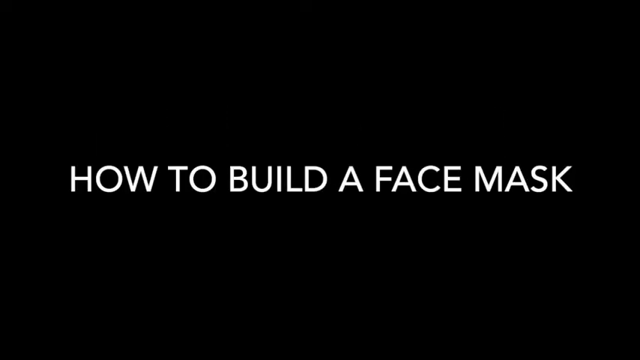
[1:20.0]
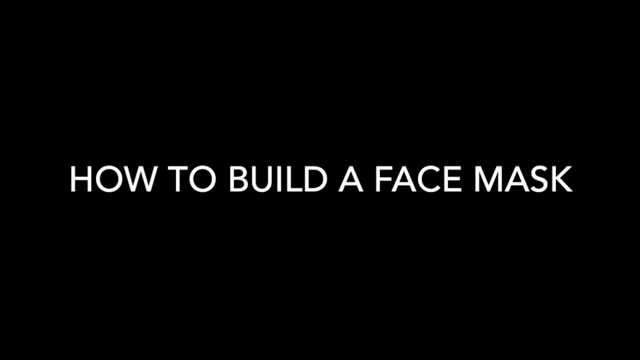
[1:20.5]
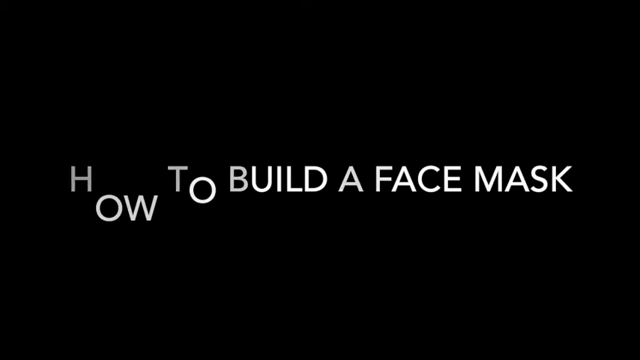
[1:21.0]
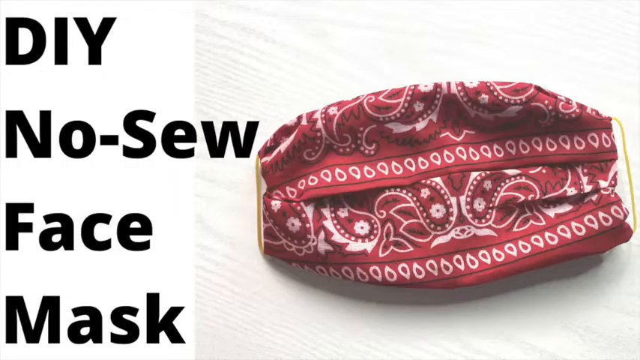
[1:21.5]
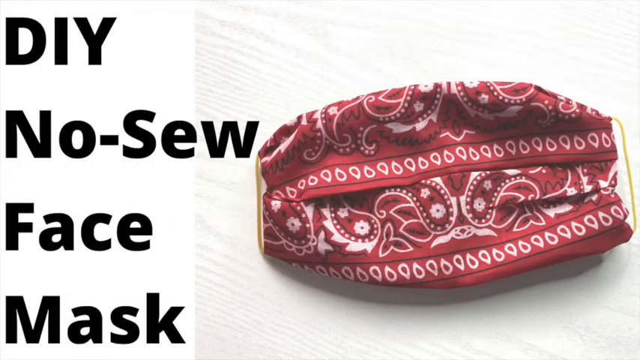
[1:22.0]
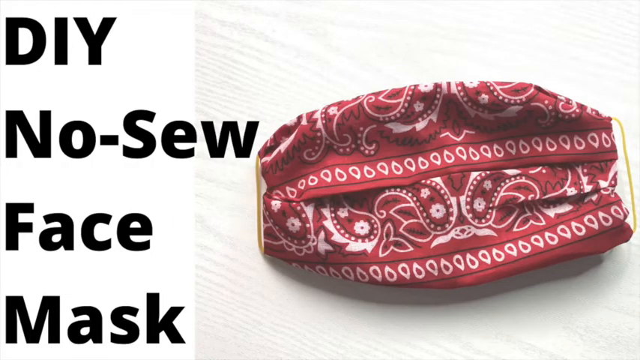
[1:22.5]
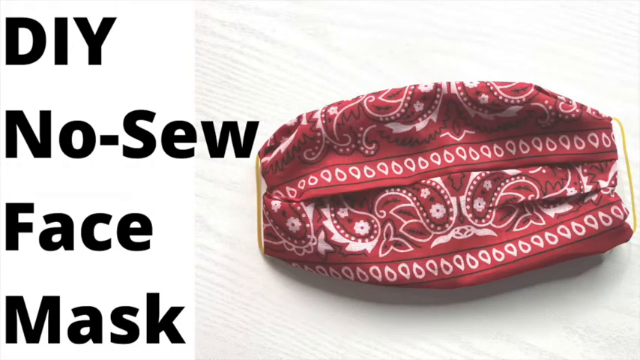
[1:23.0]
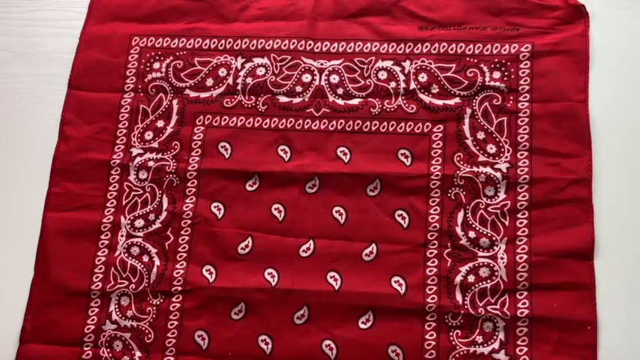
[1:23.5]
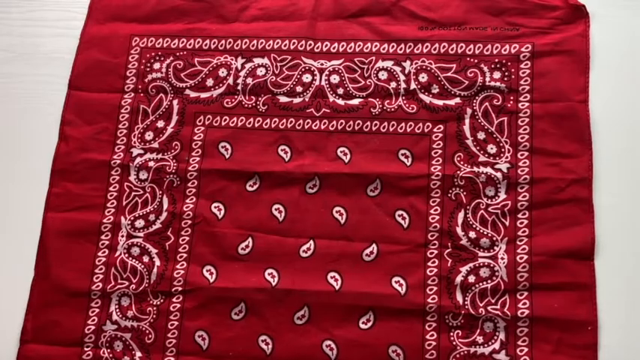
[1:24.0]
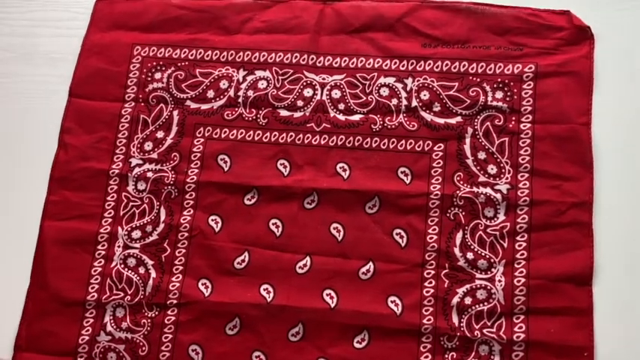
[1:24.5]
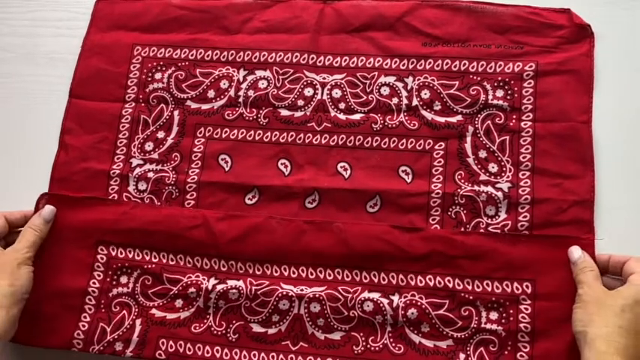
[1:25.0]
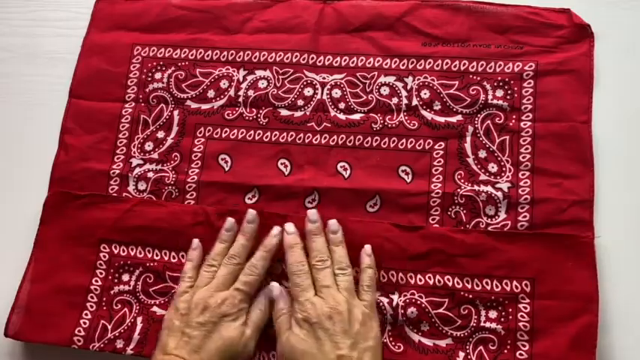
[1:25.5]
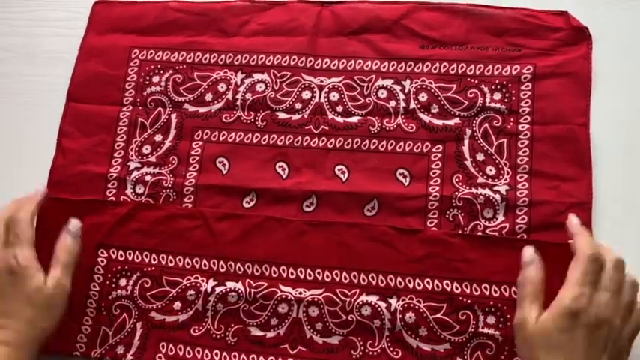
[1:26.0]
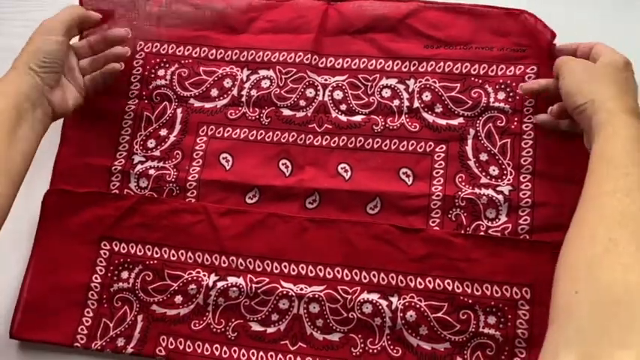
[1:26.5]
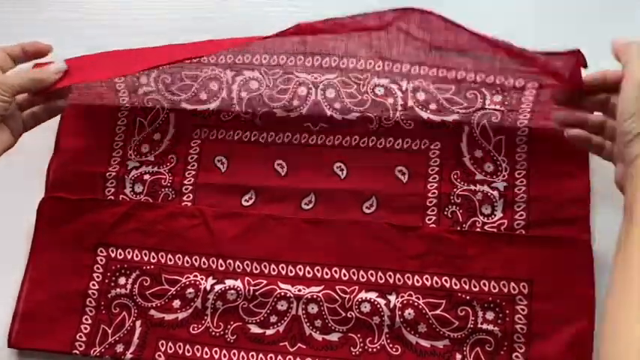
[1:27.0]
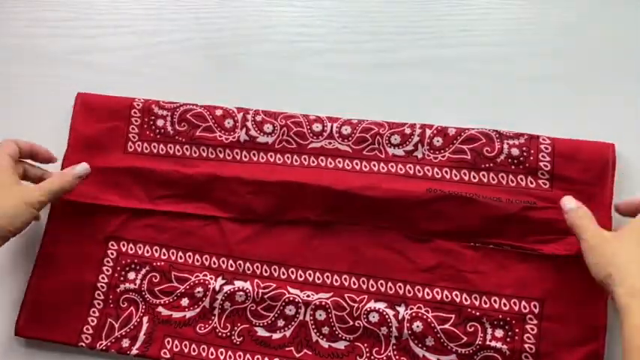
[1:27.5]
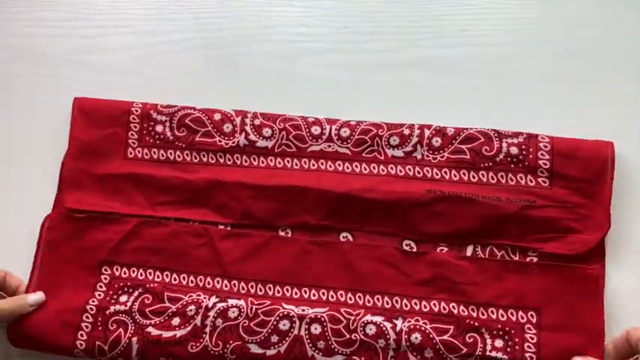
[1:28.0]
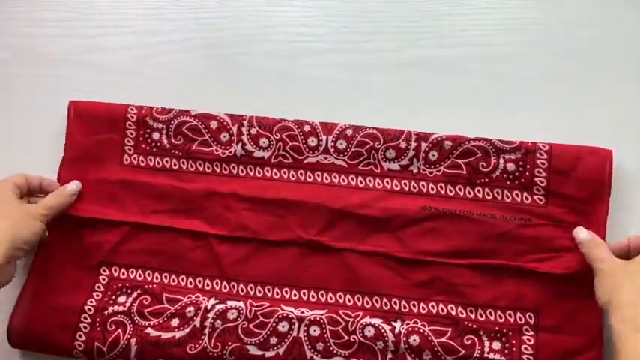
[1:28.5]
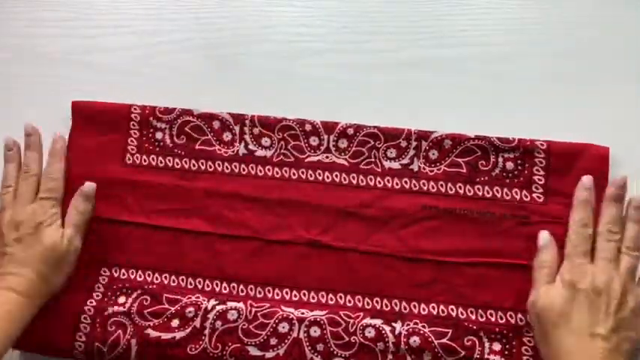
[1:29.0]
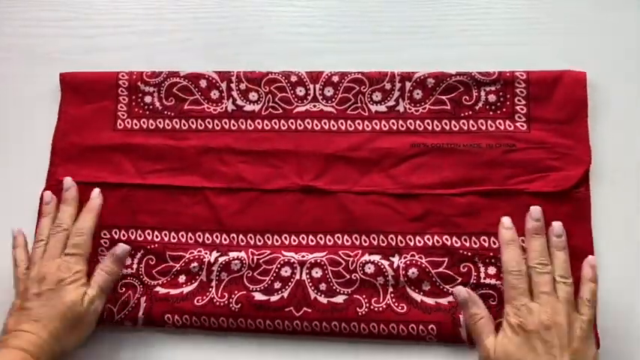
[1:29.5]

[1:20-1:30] An empty black background shows white text in the middle reading "How to Build A Face Mask." The text falls away toward the bottom as the video fades to a white background, with a red ornate piece of linen lying in the lower right corner. In the upper left corner, large black text reads "DIY," and beneath it in the same large black text "No-Sew," then "Face," then "Mask." The video switches to a recording of the red linen laid flat and stretched out against a white surface. Two hands grasp the linen at the base and fold it up and over once before flattening it out. The hands then reach to the top of the linen and fold it up and down, even out the two sides, and flatten the linen by smushing it outward from the center. A hand then moves the whole piece of linen up a little on the white surface.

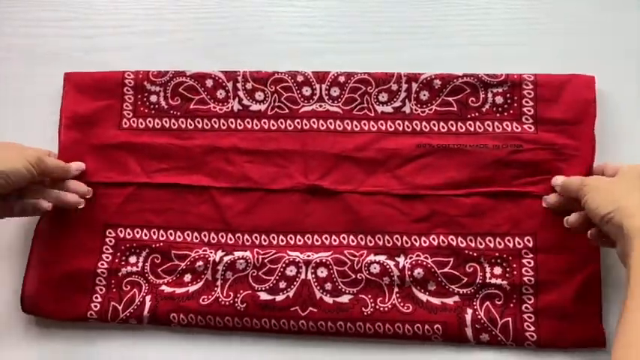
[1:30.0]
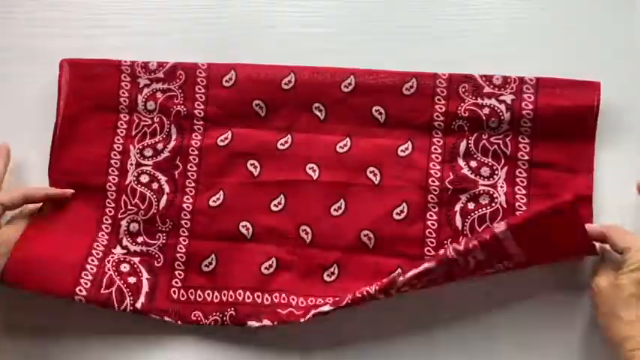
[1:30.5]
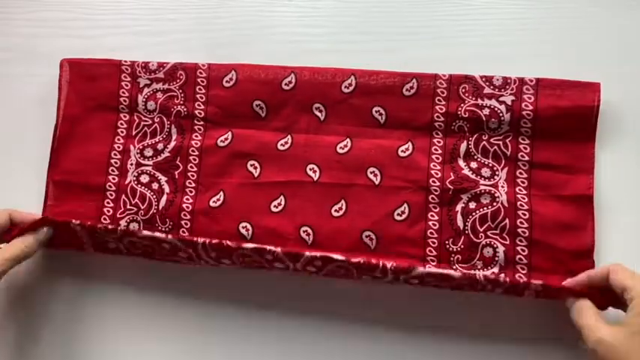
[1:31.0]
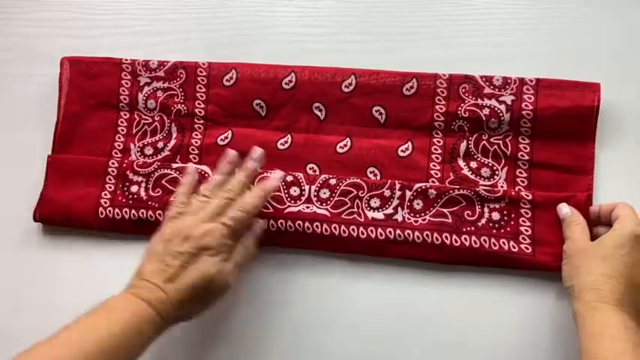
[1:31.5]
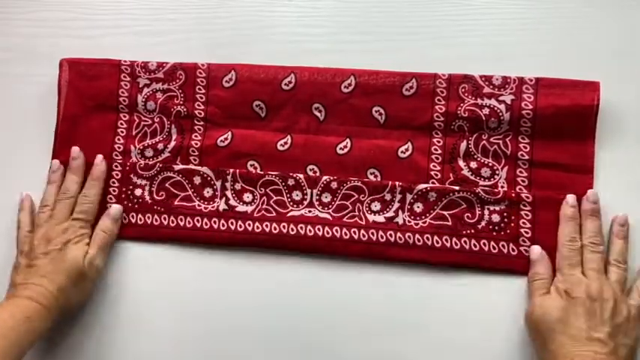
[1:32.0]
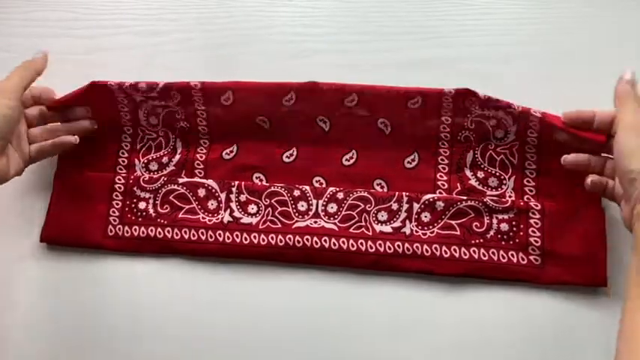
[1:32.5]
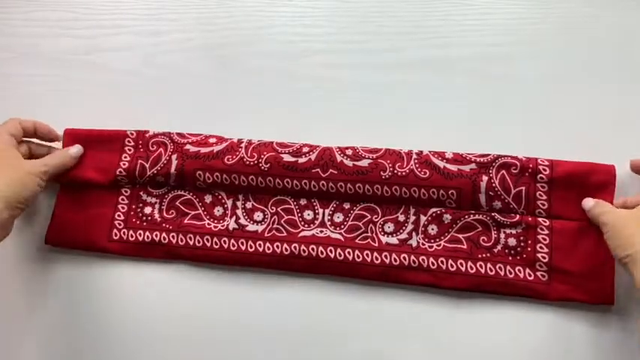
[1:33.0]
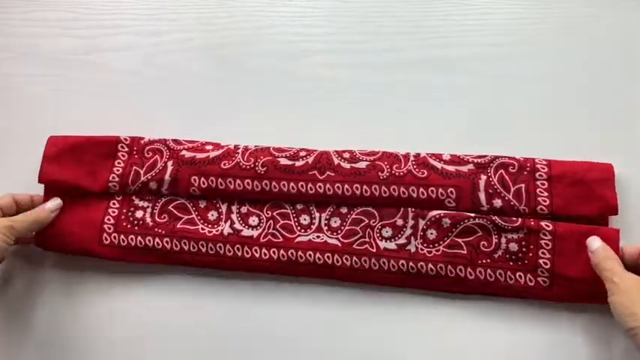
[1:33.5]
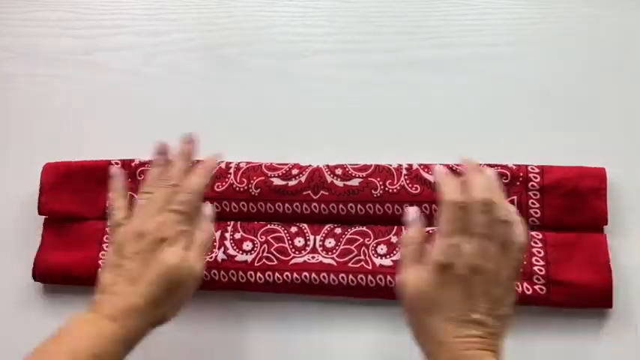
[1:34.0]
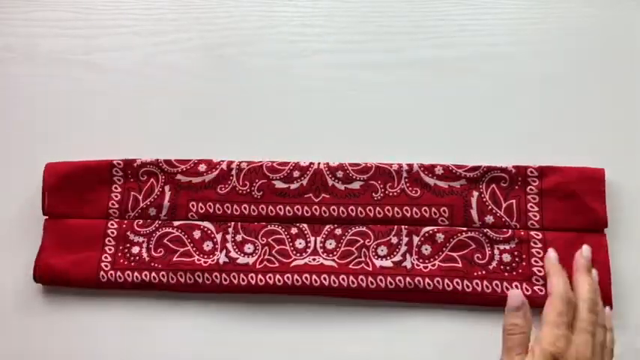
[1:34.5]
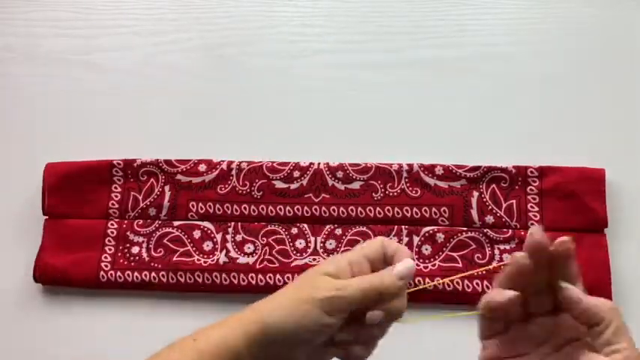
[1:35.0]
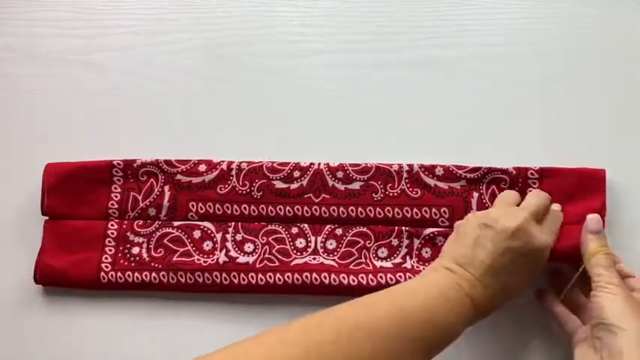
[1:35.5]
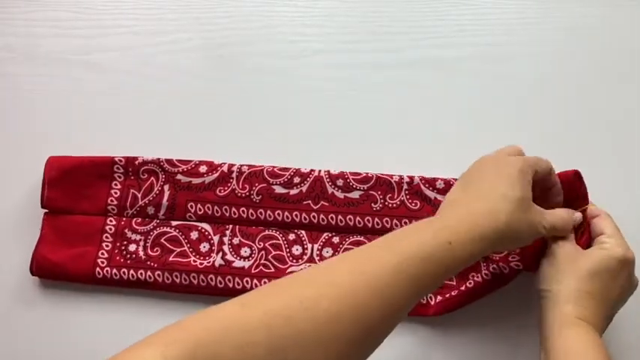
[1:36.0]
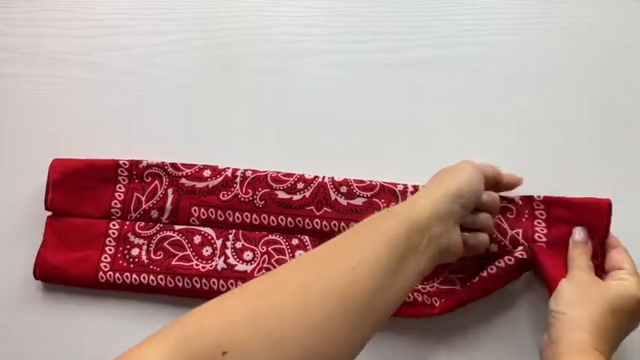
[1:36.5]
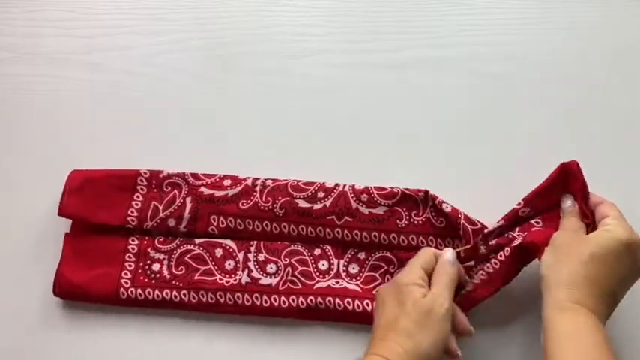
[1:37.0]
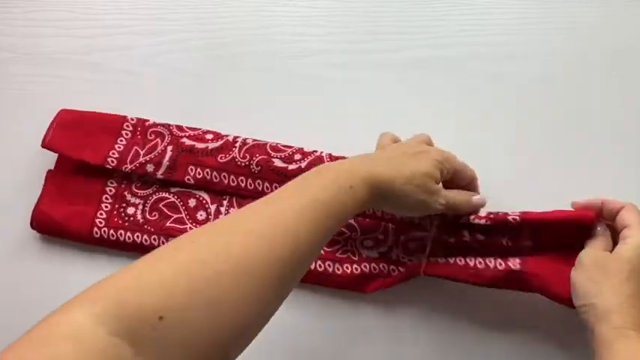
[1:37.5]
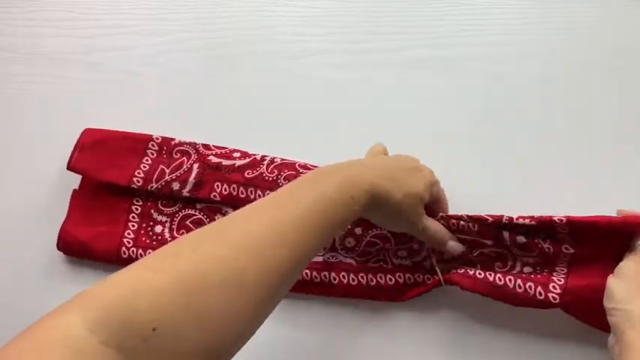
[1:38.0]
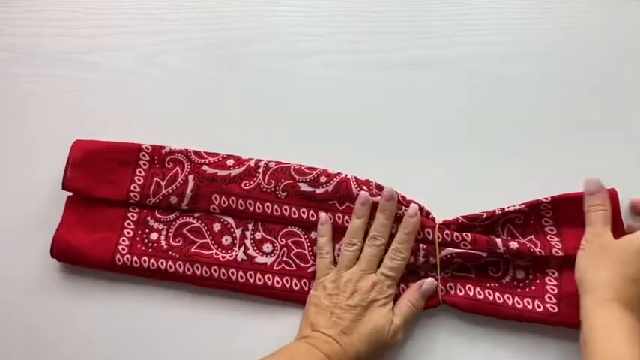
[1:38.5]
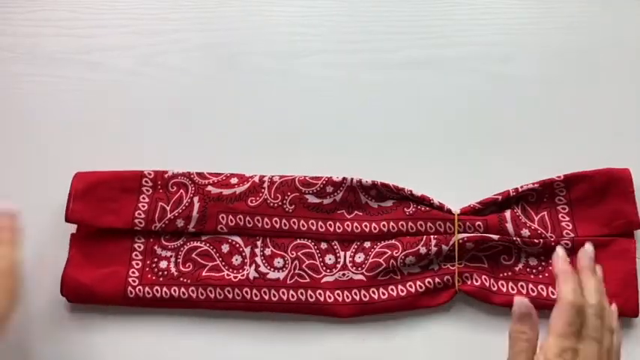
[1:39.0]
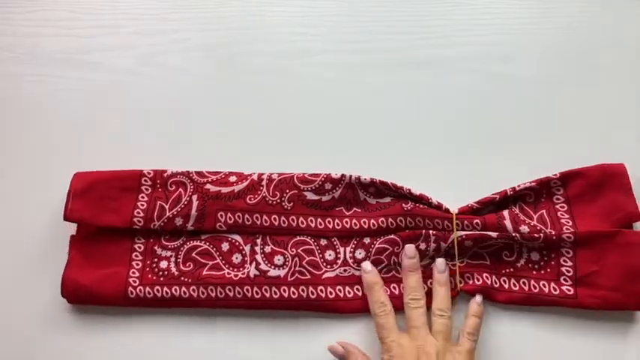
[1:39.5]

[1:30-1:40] A pair of hands clutches the top folded portion of an ornate square of red linen, which is folded at the top and bottom so the two folded ends meet in the middle. The hands hold the edge of the top piece between thumb and pointer finger. The linen is lifted, flipped over, placed back on the white surface and arranged in place. Both hands flip the bottom of the linen up and fold it once, and the left hand smooths the folded linen down. Both hands run over the linen once more, then grab the top piece and flip it up and down. The whole piece is dragged down a little, and both folded halves are smoothed with both hands. The left hand grabs a band, and as the right hand lifts the right side of the linen, the left hand slides the band over it. The linen is repositioned as the left hand grabs another rubber band.